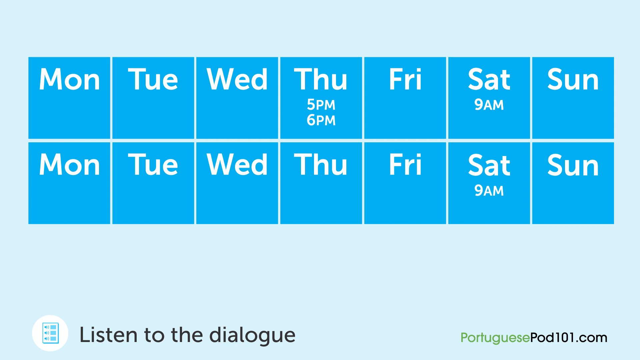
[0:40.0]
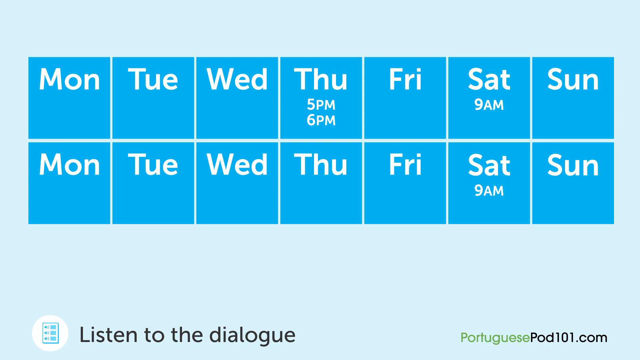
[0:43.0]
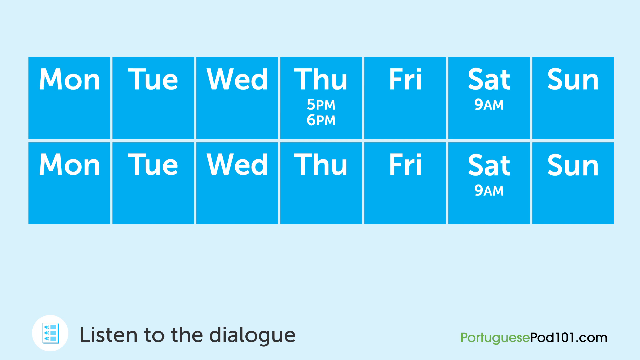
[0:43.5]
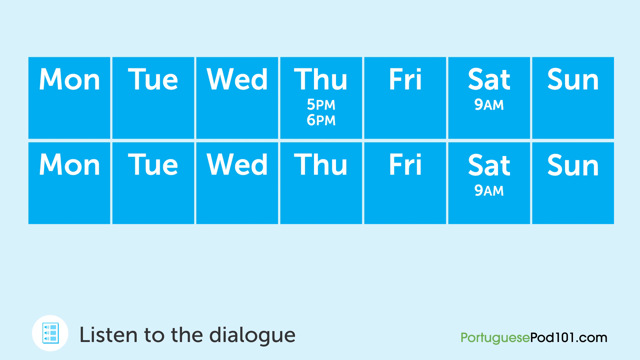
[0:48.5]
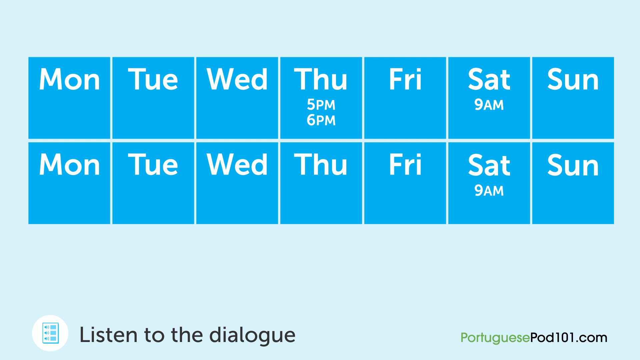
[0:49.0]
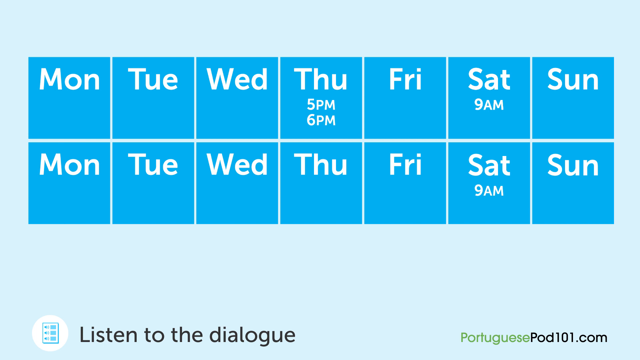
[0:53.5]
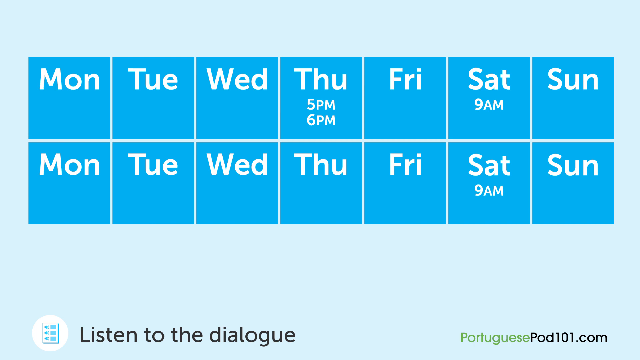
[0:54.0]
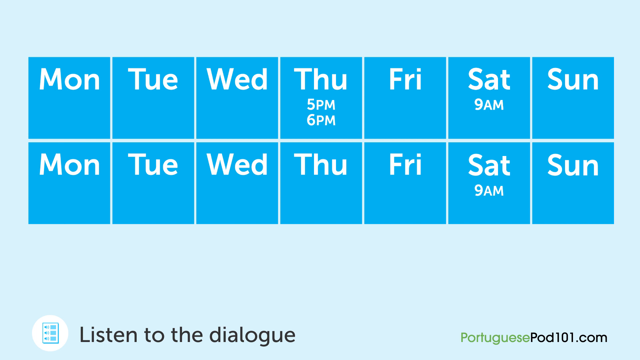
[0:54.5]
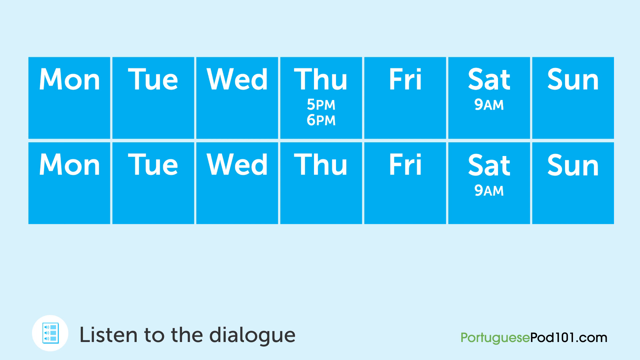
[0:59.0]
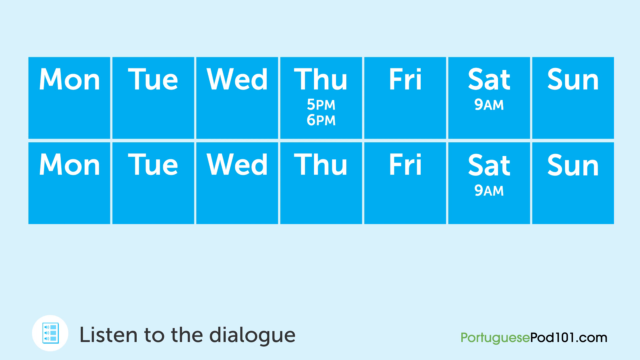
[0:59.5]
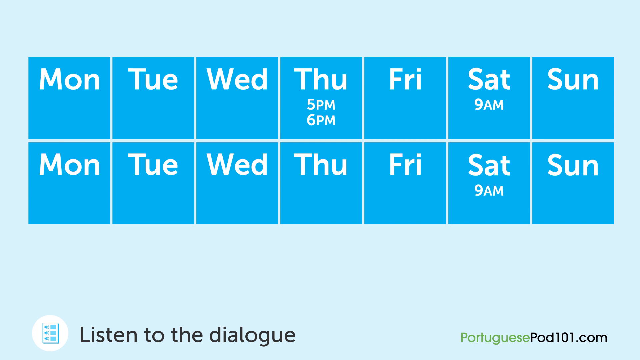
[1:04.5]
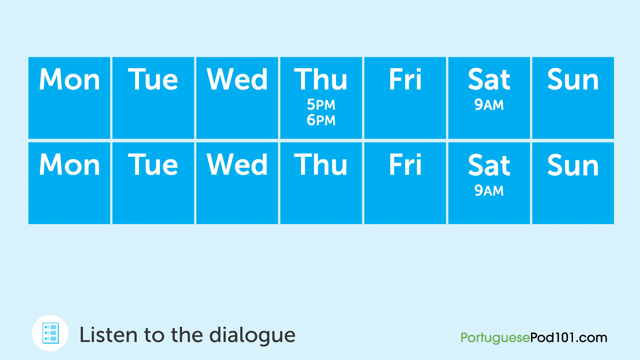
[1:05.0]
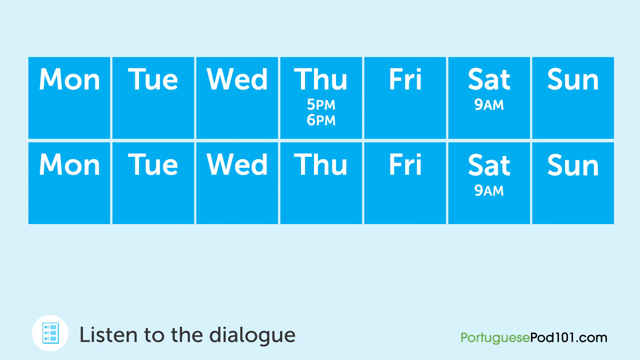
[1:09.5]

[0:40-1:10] The two-week calendar, with Monday through Sunday, remains on screen, and there appear to be times set aside for learning, such as Thursday at 5 p.m. and 6 p.m., Saturday at 9 a.m., and the next Saturday at 9 a.m. The calendar is made up of 14 blue blocks, medium-sized square boxes separated by a thin line between every day of the week and a thicker white line between the weeks. Text at the bottom of the screen then says to listen to the dialogue, with a blue icon representing sound signals. The background is blue at the top and fades to white further down the screen.